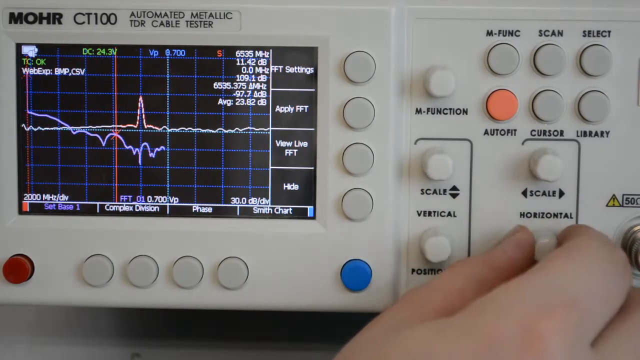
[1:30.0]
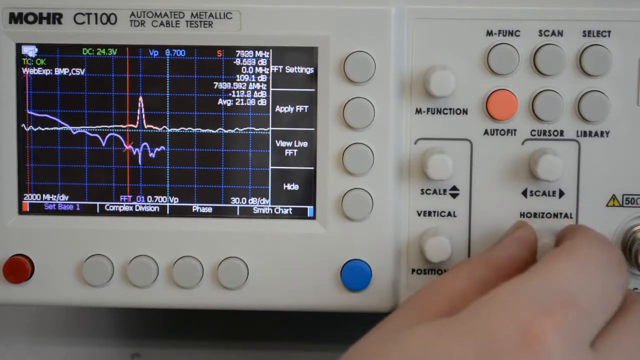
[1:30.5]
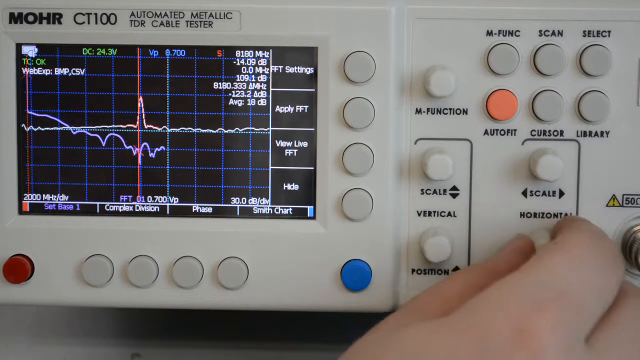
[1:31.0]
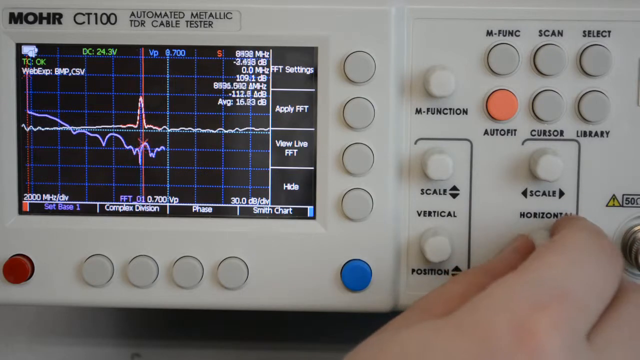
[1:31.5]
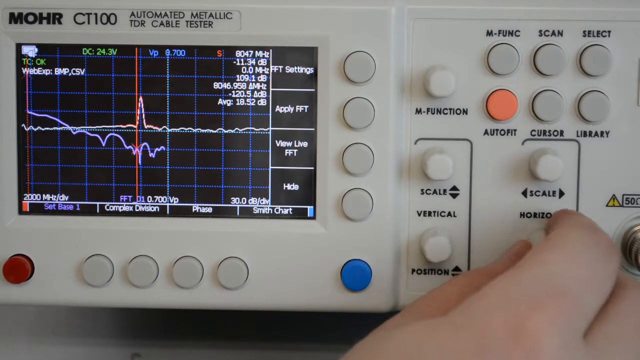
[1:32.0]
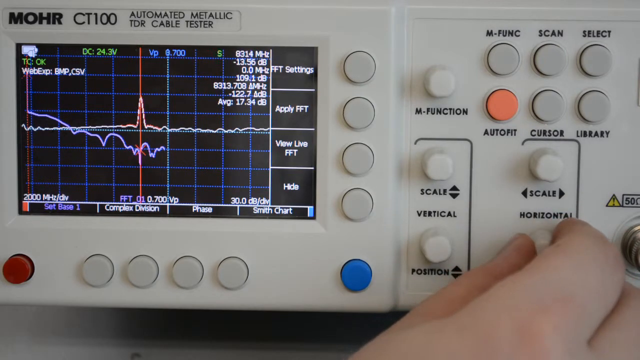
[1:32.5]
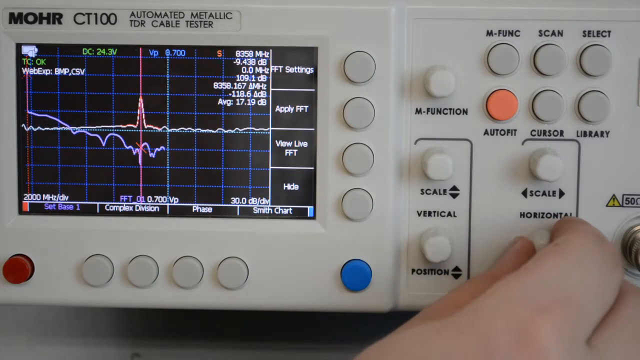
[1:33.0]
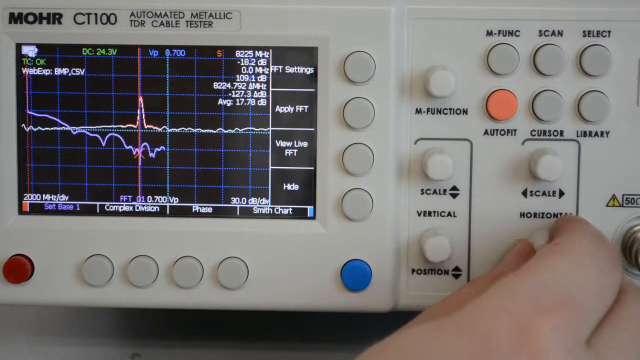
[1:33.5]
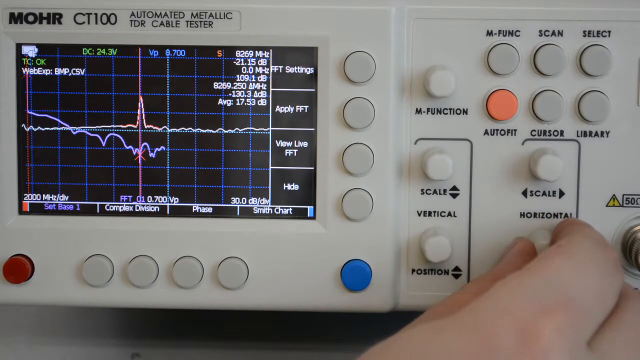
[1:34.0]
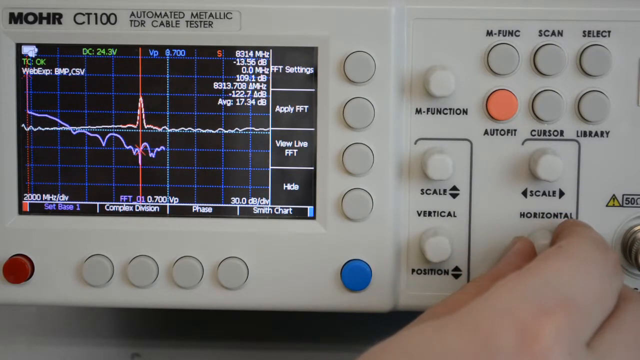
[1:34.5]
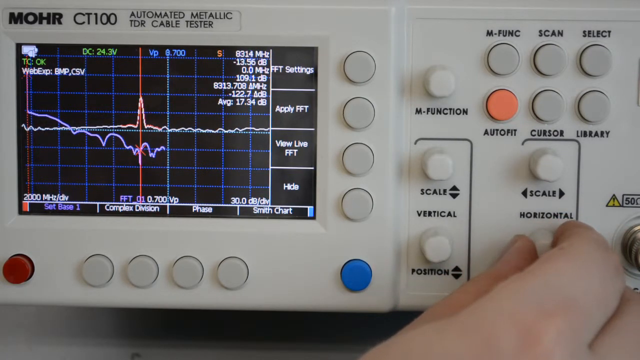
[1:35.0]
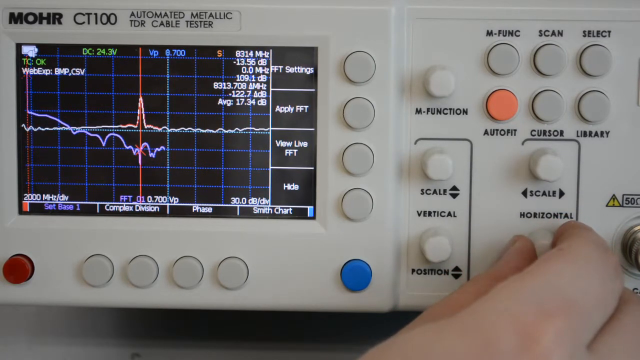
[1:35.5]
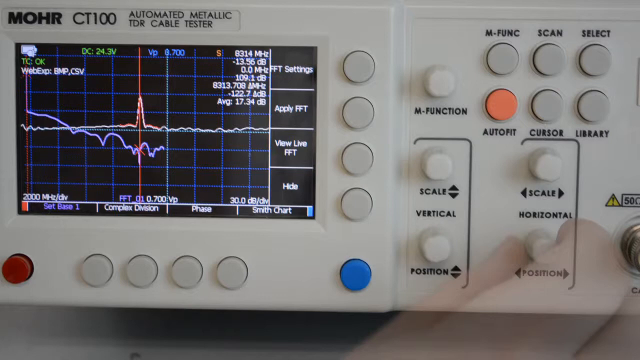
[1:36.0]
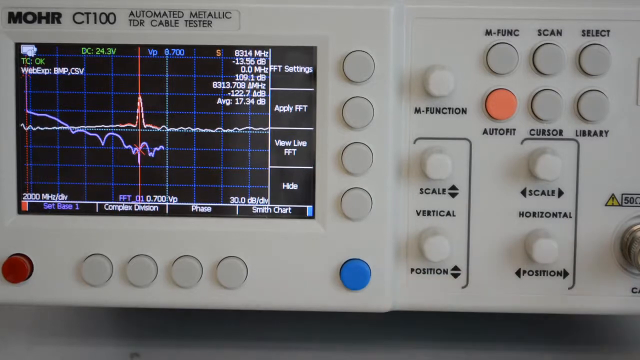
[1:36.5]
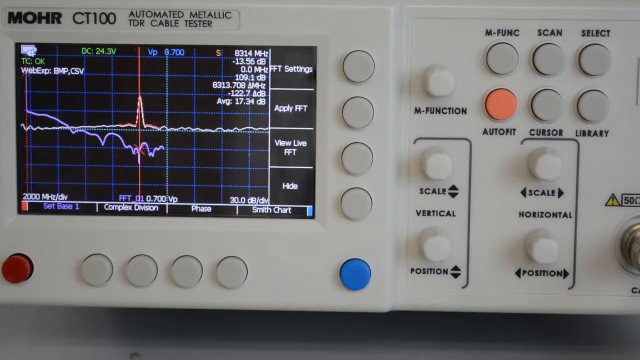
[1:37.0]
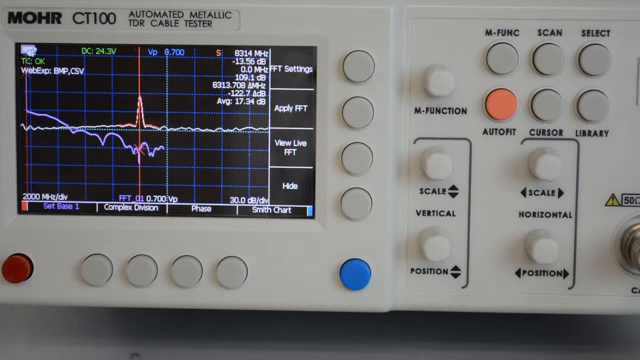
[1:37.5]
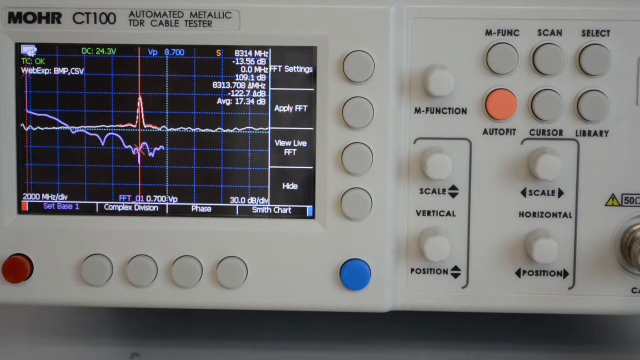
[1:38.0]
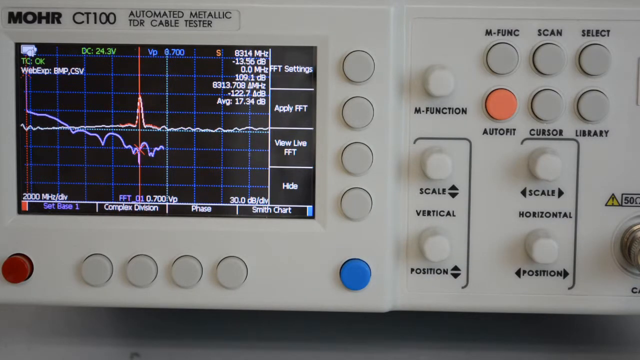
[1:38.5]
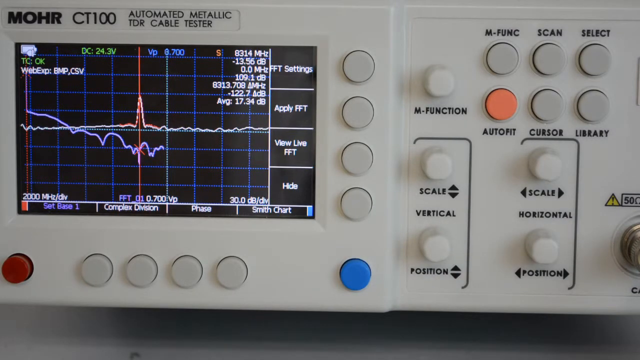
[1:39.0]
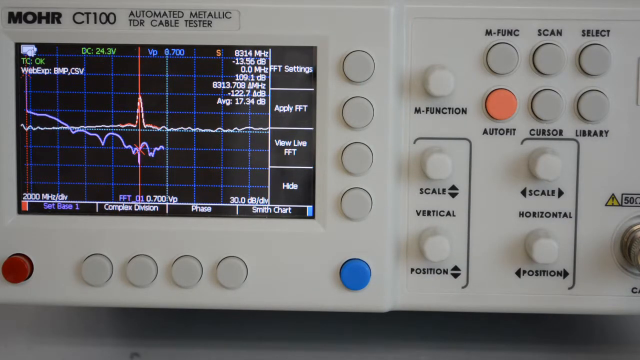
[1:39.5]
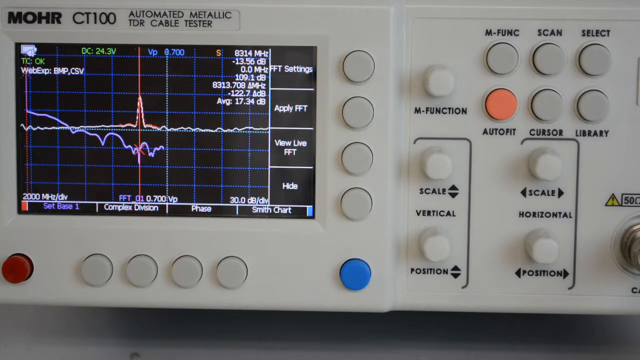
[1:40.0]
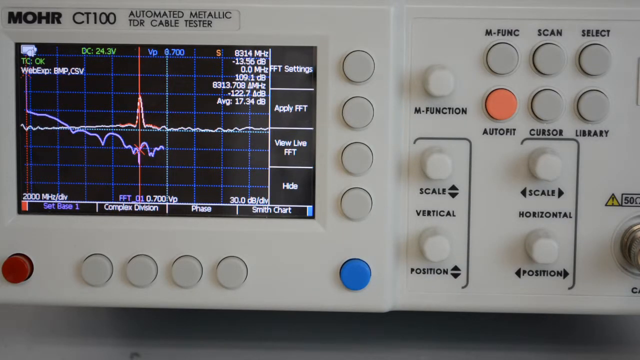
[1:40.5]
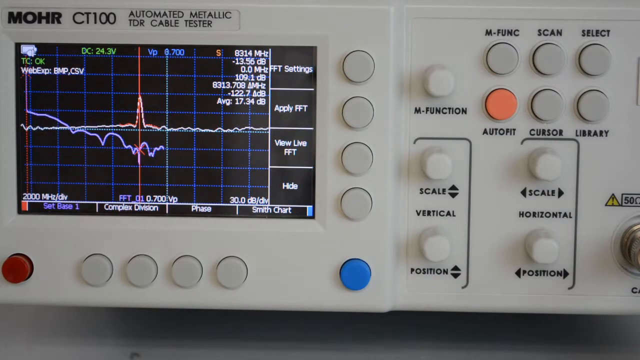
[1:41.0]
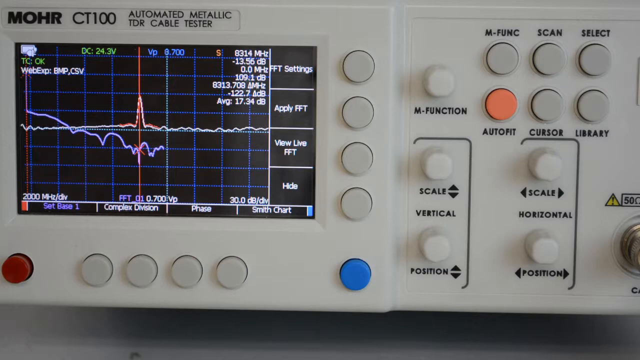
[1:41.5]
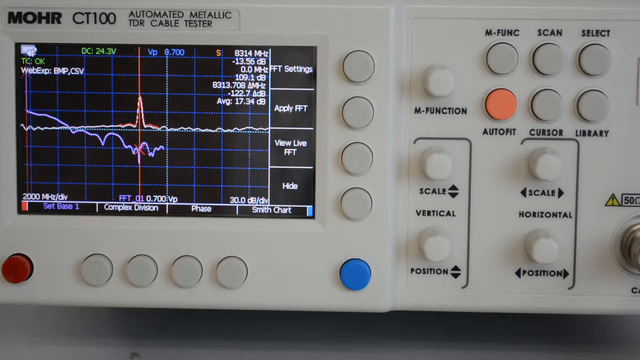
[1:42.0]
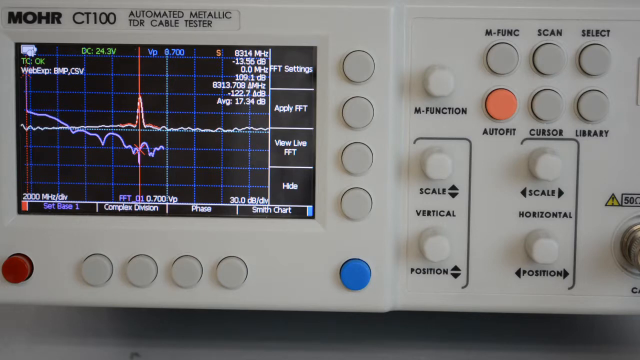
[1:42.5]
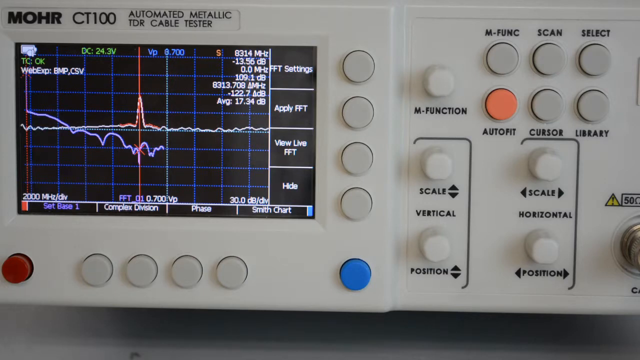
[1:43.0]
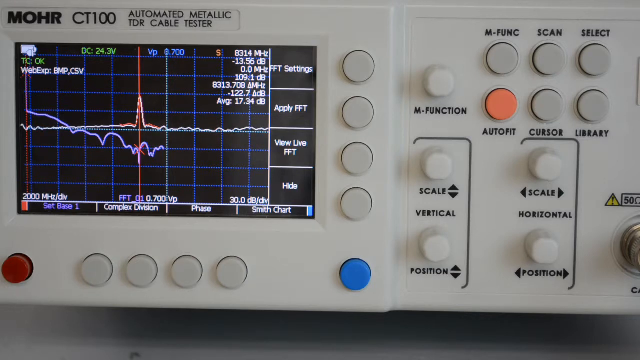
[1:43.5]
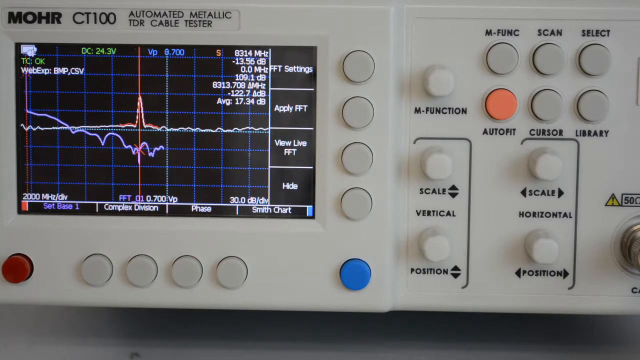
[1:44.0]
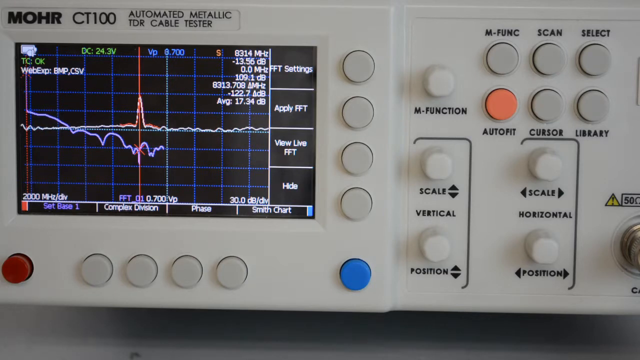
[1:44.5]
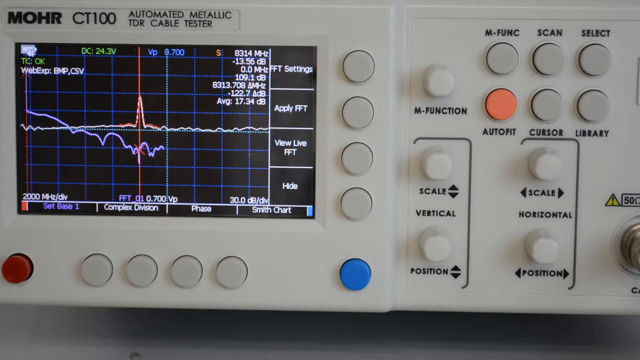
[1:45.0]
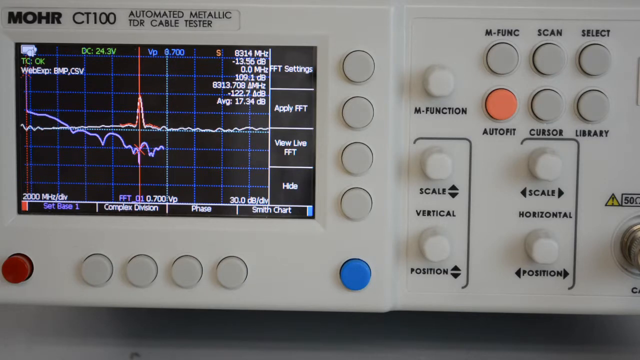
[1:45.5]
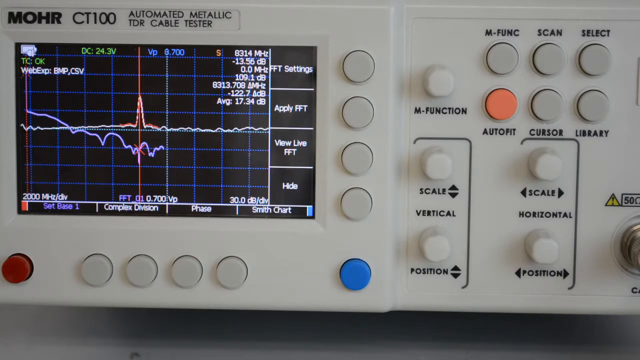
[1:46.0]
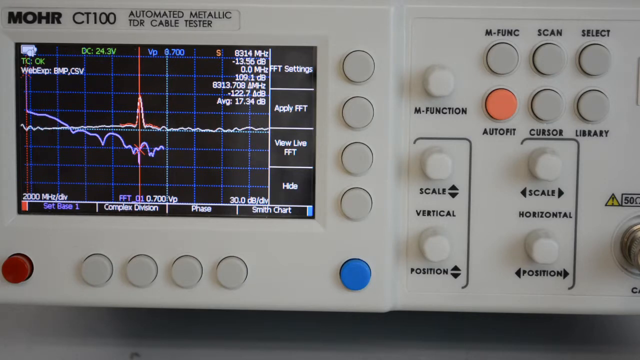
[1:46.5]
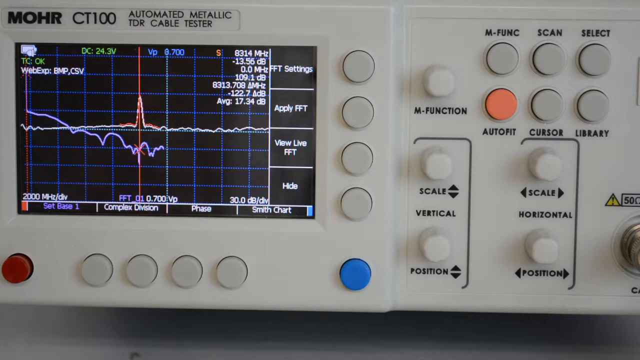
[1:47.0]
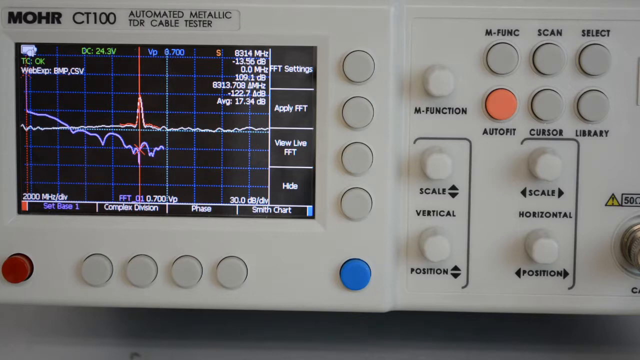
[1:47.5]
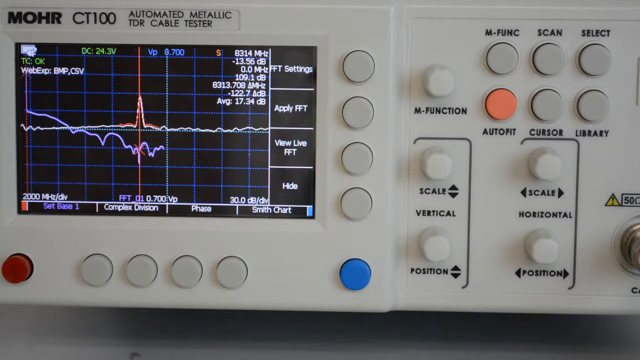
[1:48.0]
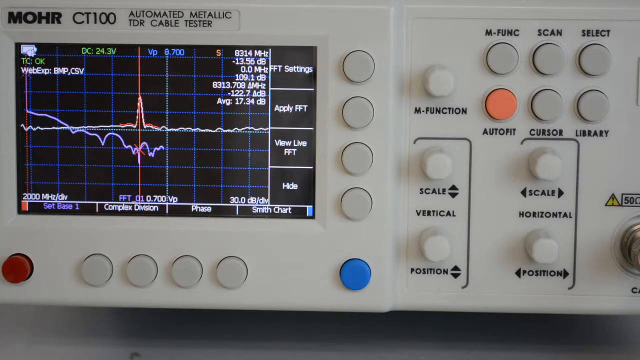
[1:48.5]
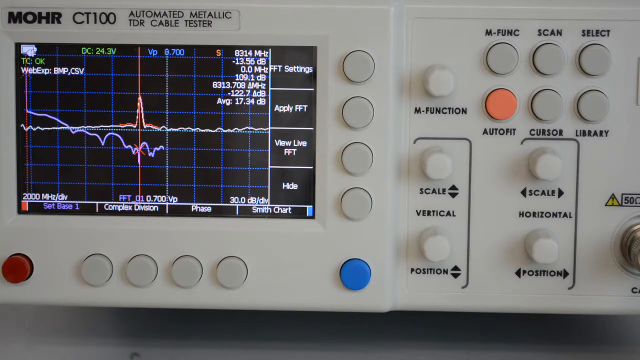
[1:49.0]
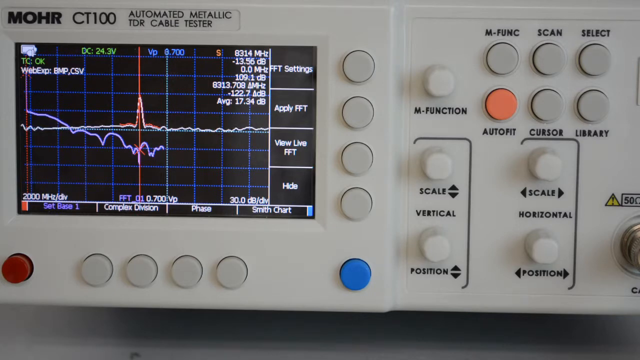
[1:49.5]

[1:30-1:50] A hand works the position button in the bottom right corner of the machine, slowly turning the button or knob clockwise several turns before turning it slightly counterclockwise to fine-tune and adjust it. The hand stays on the knob and continues fine-tuning for several seconds before disappearing from the frame. The graph remains visible with the black background and blue grids, and several spots of information and numbers appear on the screen. The camera stays completely focused on this area, and there is no movement. The screen appears stagnant and idle, apparently waiting for a test to start that requires input from the user.